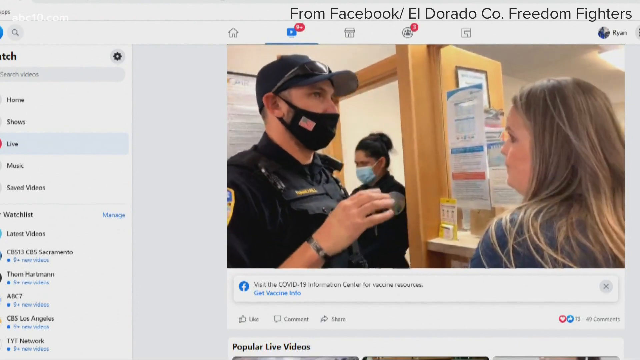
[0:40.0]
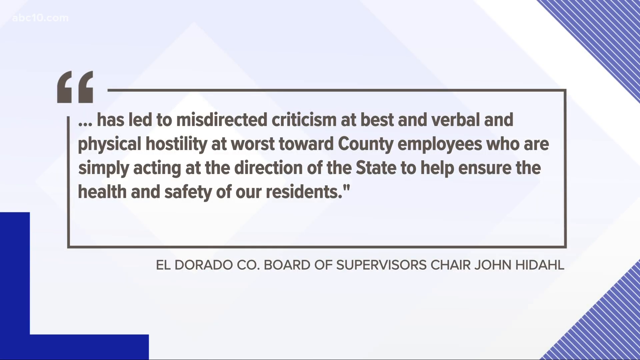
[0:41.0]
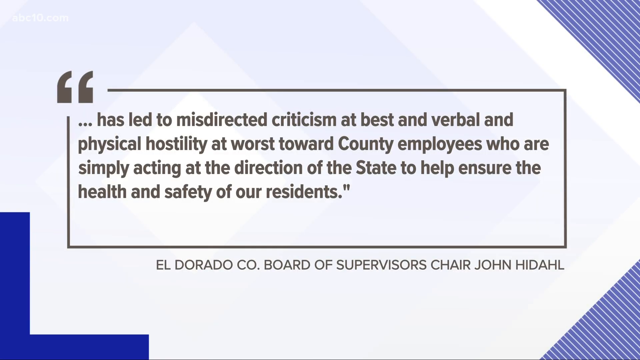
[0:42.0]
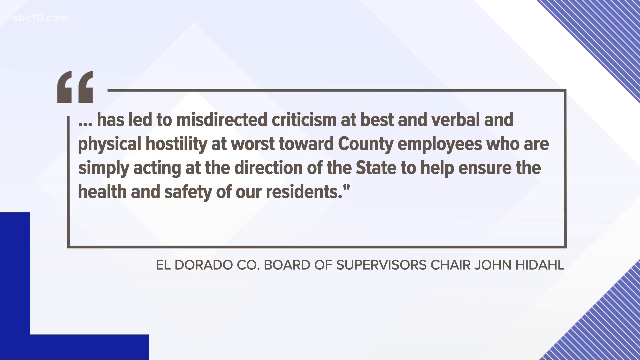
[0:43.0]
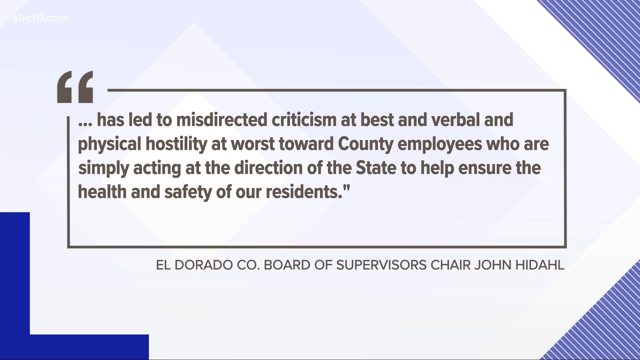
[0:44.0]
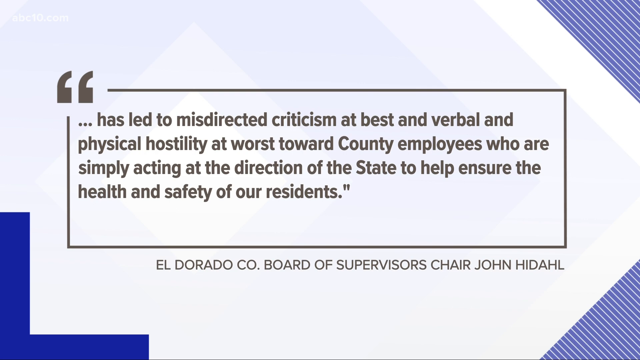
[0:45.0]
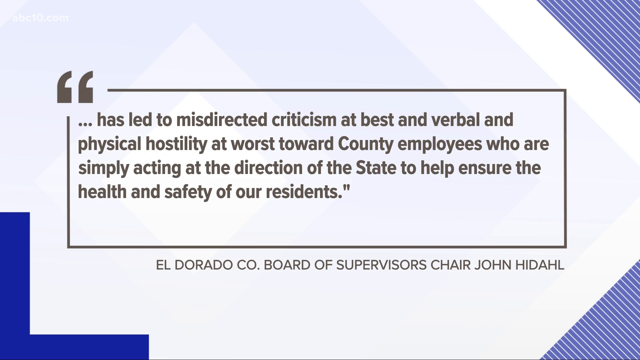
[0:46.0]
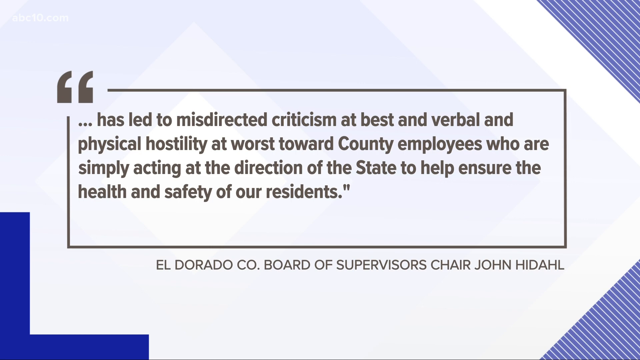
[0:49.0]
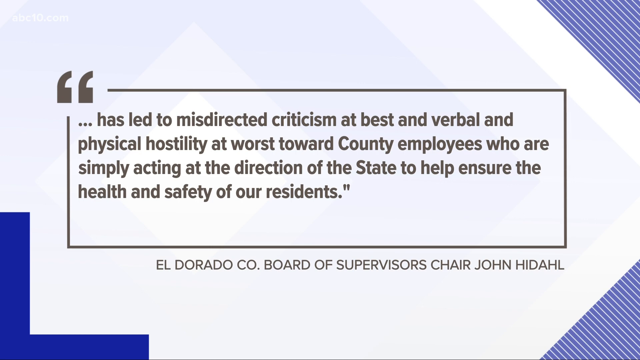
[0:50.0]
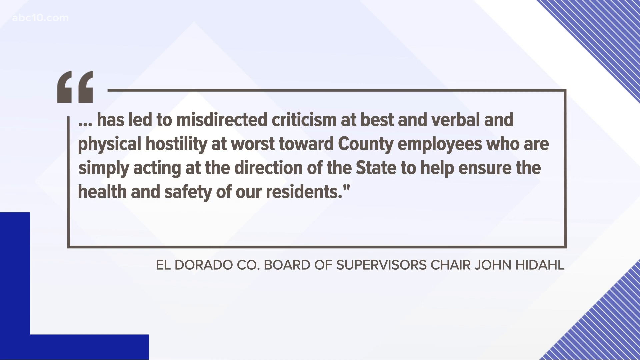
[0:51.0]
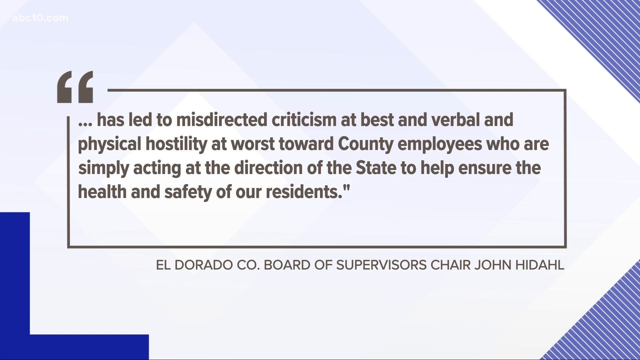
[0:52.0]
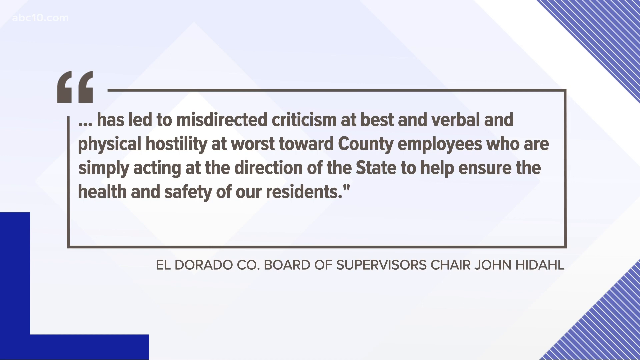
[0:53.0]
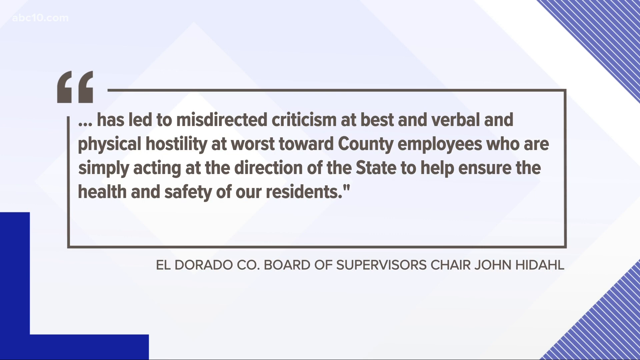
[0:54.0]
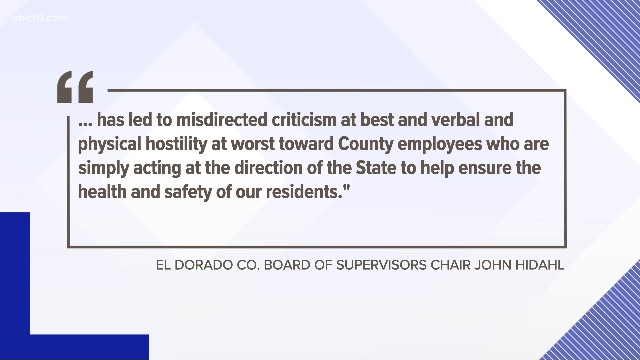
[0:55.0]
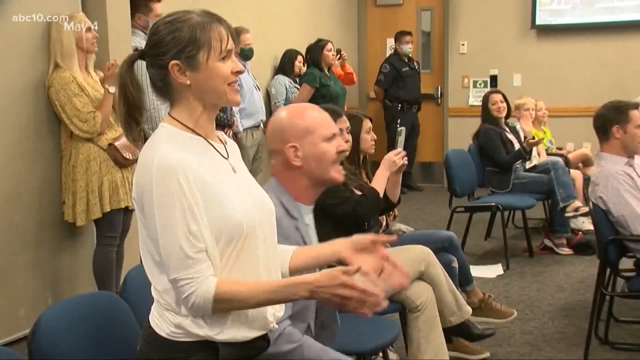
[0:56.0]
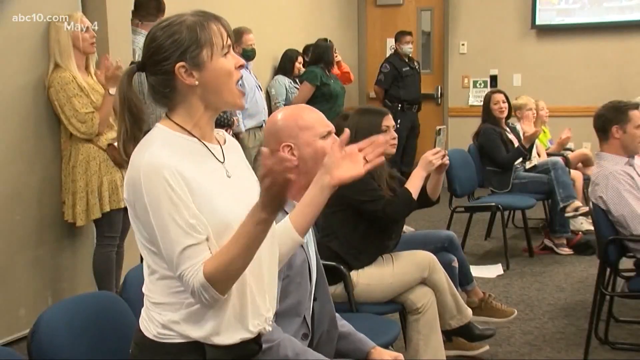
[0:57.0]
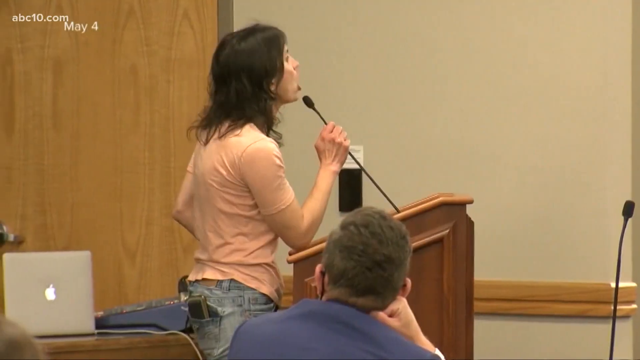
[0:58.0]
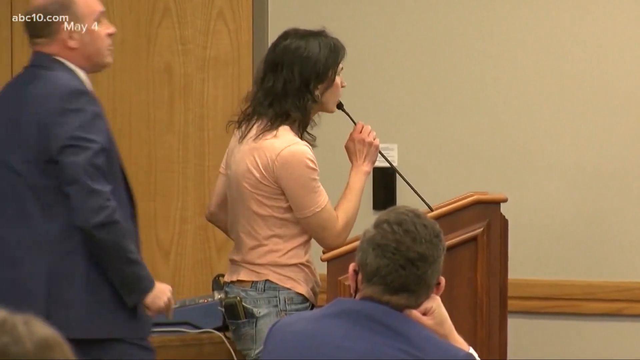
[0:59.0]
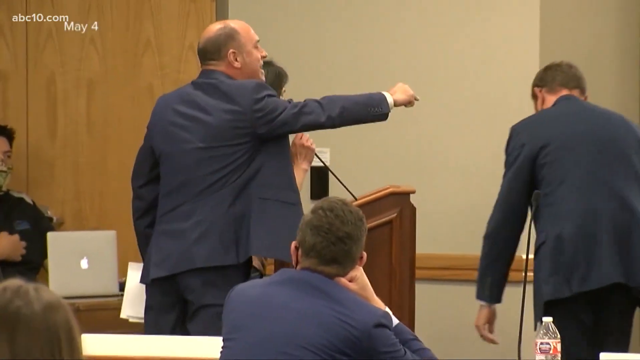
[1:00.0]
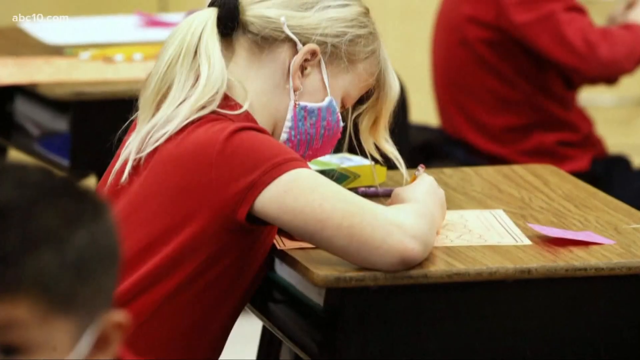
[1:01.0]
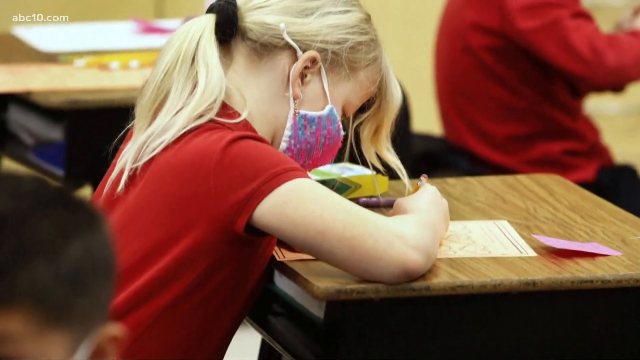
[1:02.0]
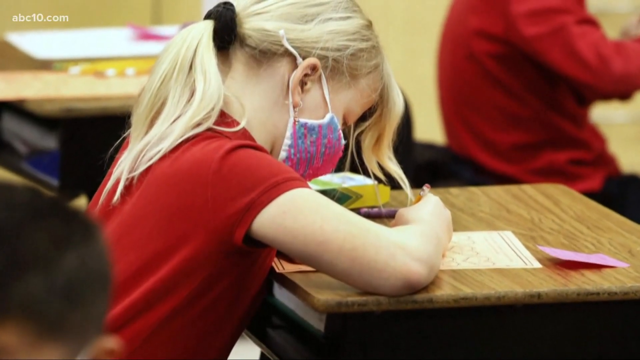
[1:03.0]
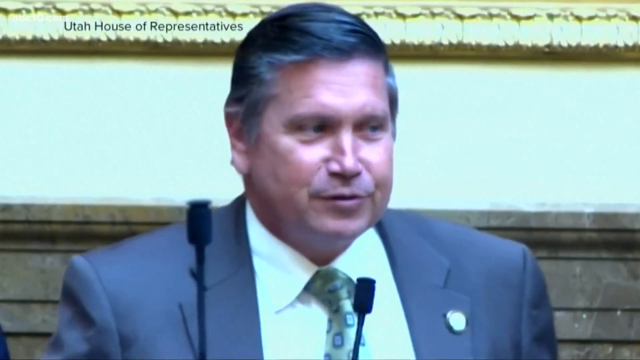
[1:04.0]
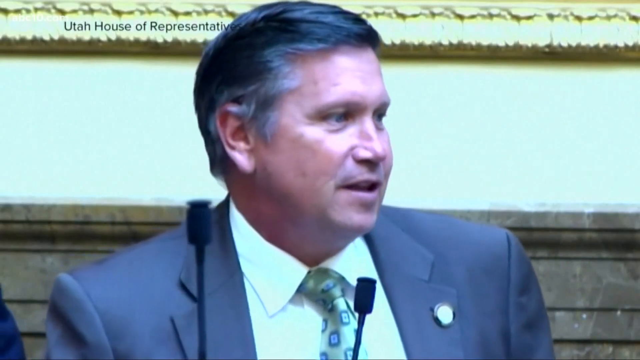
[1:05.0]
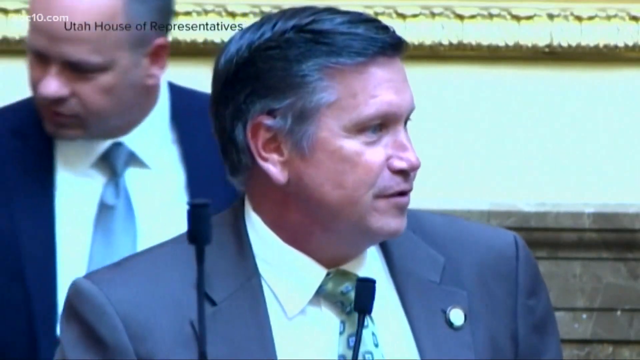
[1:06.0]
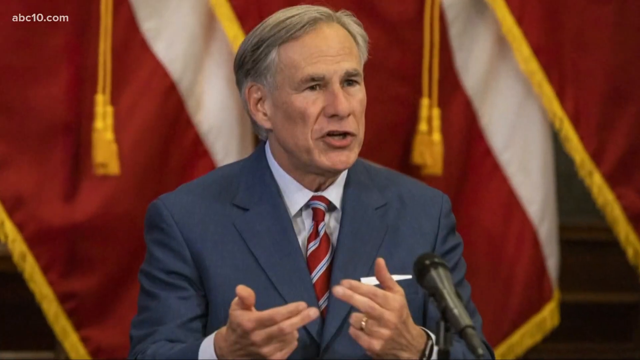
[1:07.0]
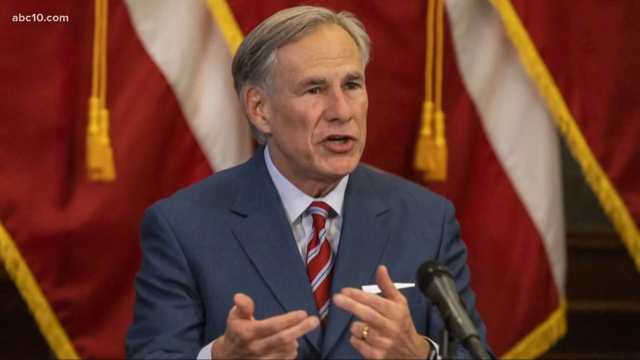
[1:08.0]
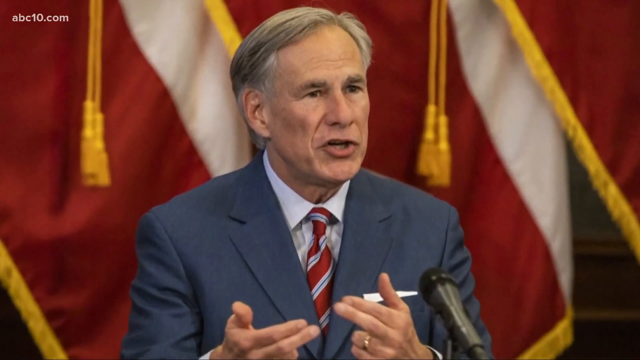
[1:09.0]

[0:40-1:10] The video continues playing on the Facebook page, a video of a video. The police officer is still talking to the woman inside a building. He wears a black hat with black sunglasses on top of it and a black mask with an American flag on the side. The woman he is talking to is not wearing a mask. Another police officer, wearing a blue mask, is coming out of the door behind him. Next, a quote appears from the Eldorado Company Board of Supervisors Chair John Heidehall, reading: "has led to misdirected criticism at best and verbal and physical hostility at worst toward county employees who are simply acting at the direction of the state to help ensure the health and safety of our residents." This is followed by shots of kids in school and then multiple clips of people talking and apparently fighting about something in a meeting.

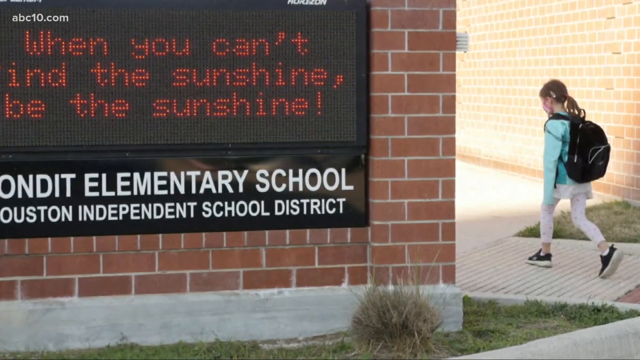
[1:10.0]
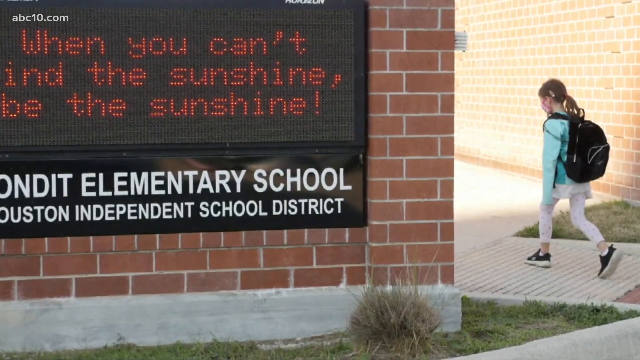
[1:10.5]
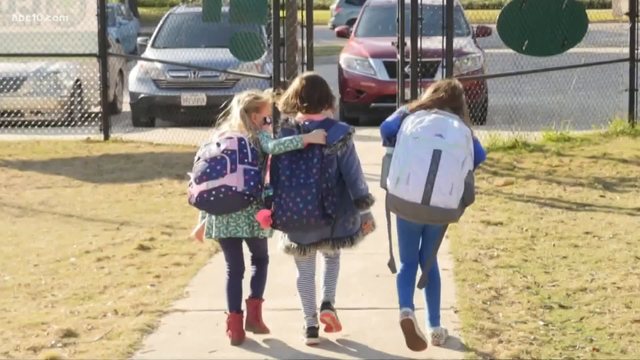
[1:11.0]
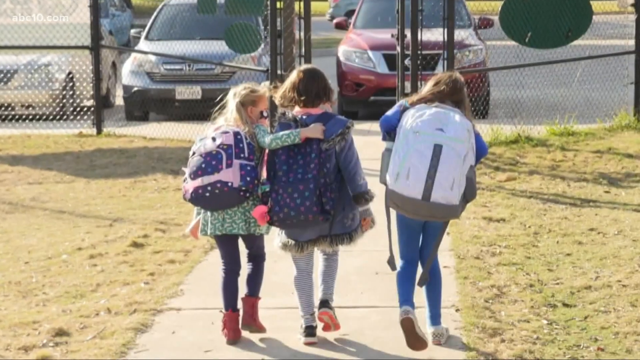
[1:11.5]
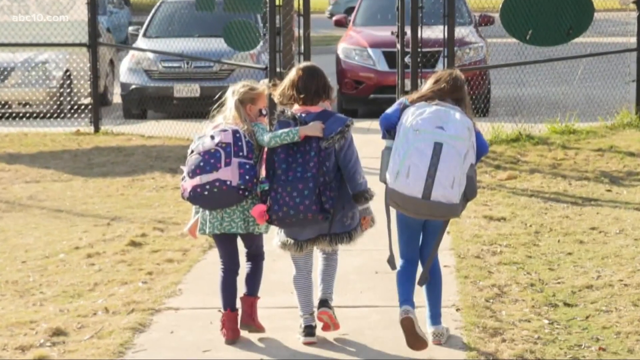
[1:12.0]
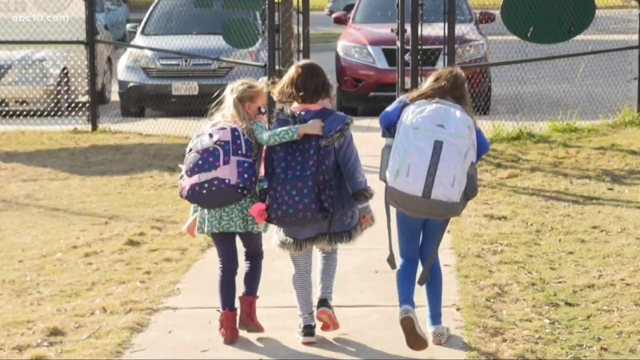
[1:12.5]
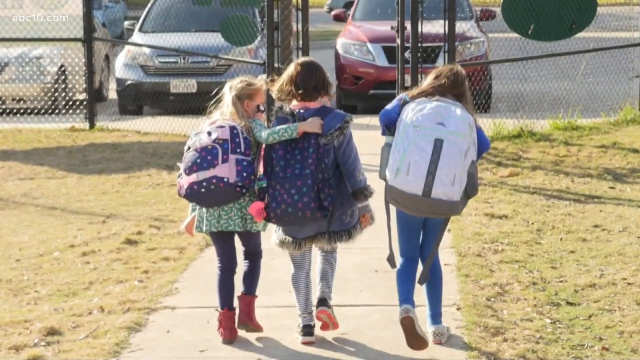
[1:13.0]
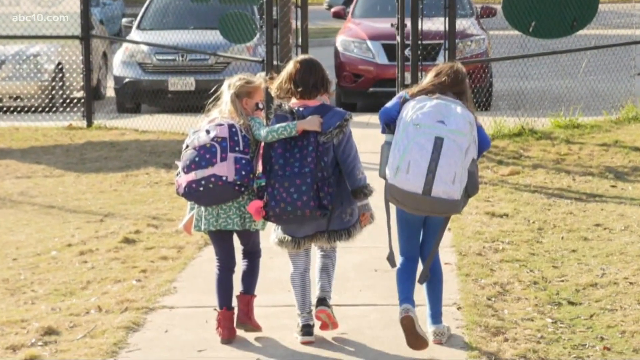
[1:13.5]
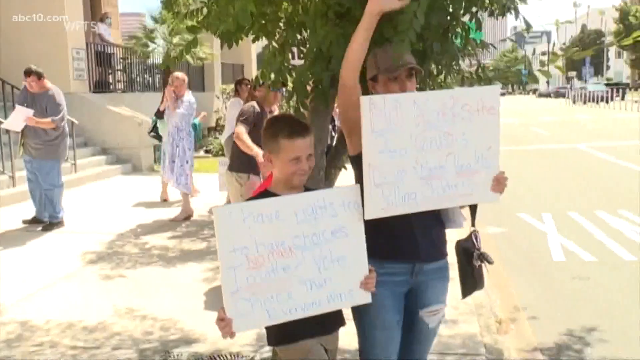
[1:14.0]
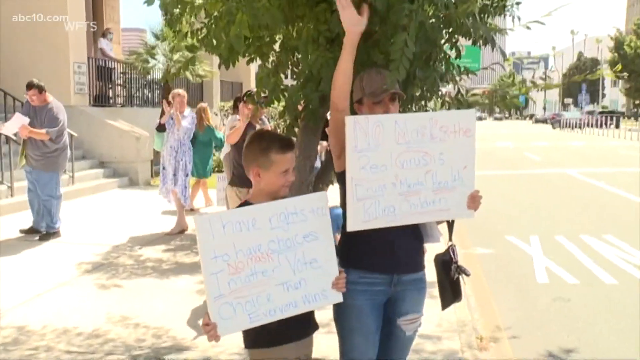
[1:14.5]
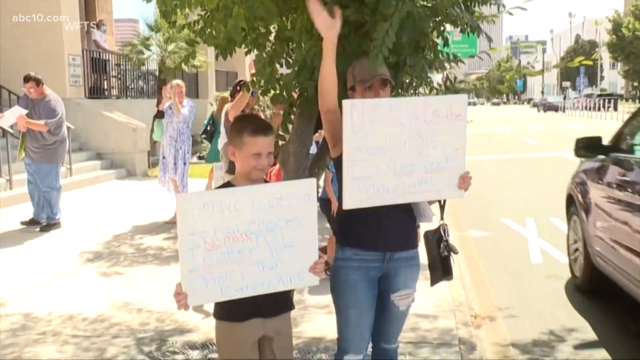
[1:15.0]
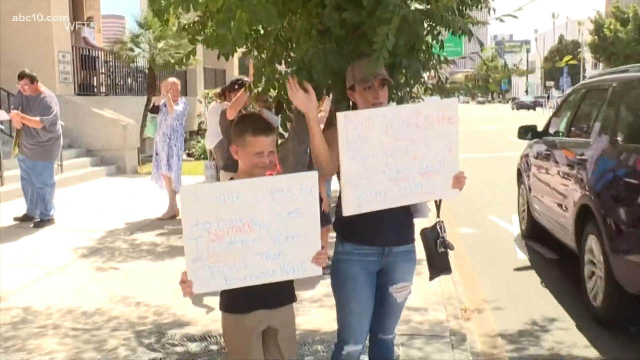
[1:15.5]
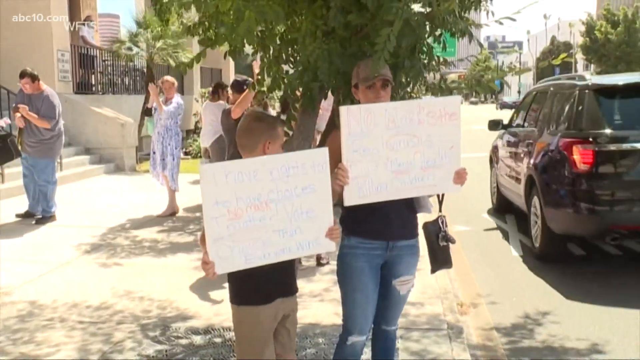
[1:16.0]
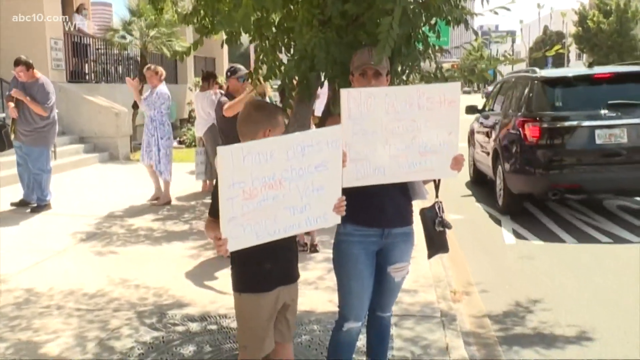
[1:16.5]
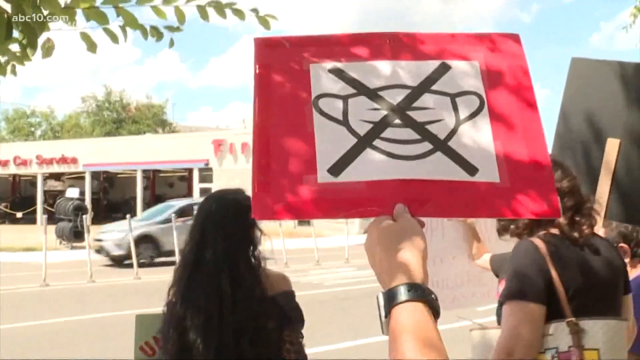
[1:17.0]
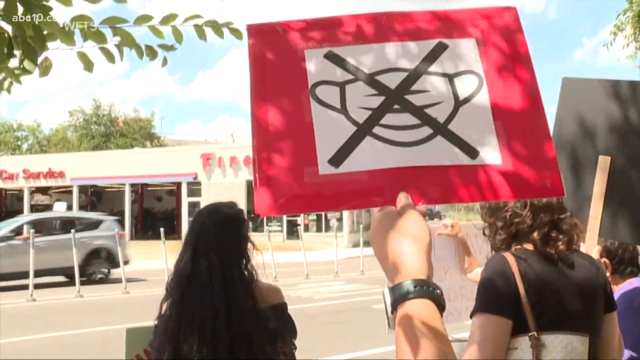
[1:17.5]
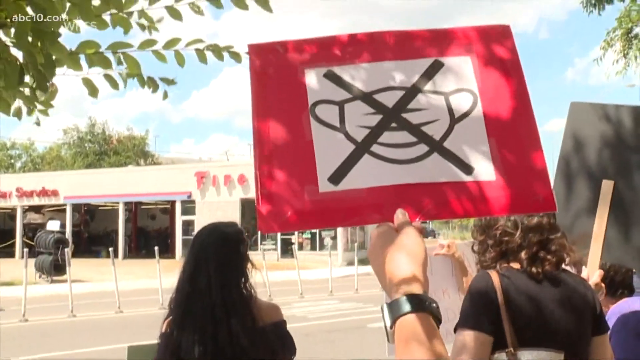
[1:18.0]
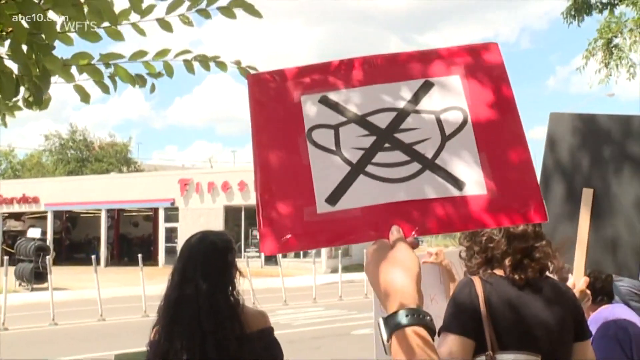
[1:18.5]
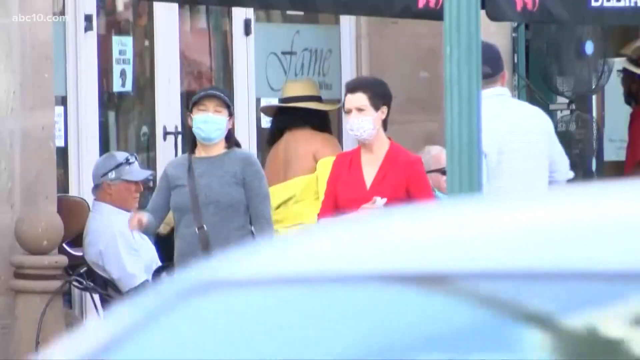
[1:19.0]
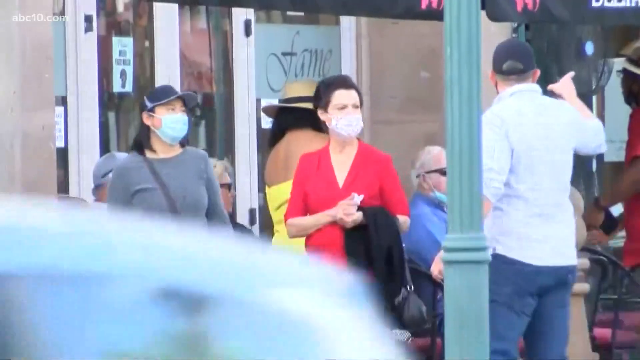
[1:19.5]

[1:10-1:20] The front wall of an elementary school is shown, made of brick. A banner with a changing sign hangs on it, appearing to say "when you can't" and "be the sunshine." A little girl on the right walks in with a black backpack on her back. Next comes a still shot of three young girls walking down a path with backpacks on; the girl on the left has her arm around the girl on the right. Another shot shows people outside, with a green sign for a major road in the background. Then people are shown protesting against masks.